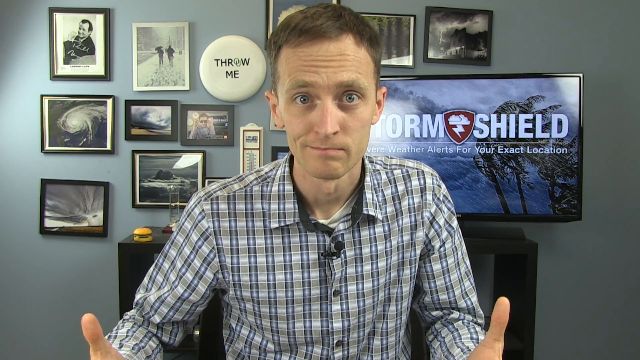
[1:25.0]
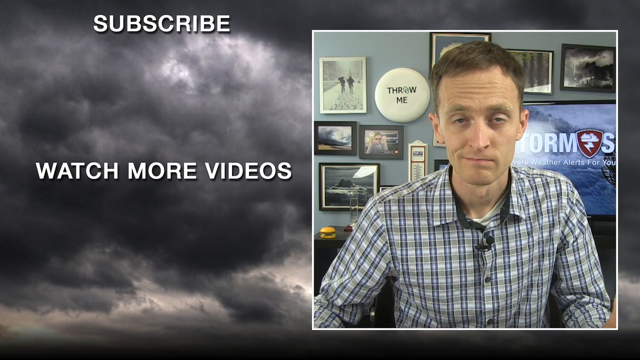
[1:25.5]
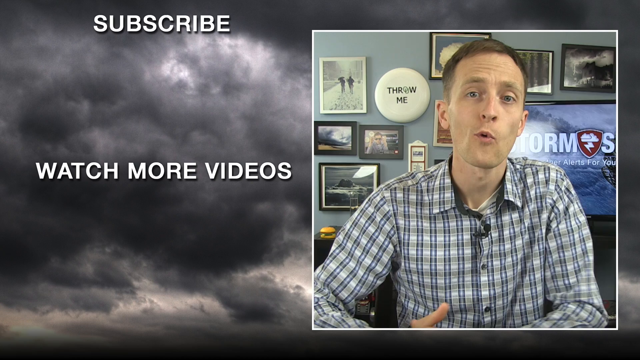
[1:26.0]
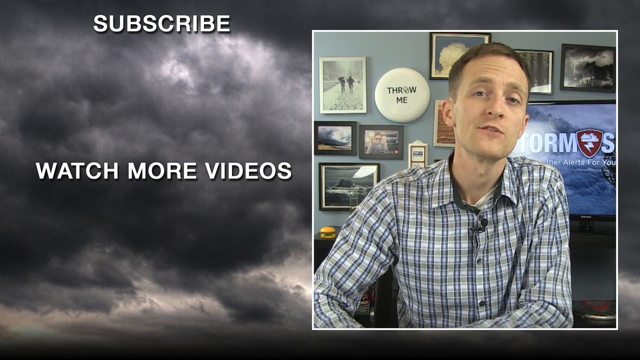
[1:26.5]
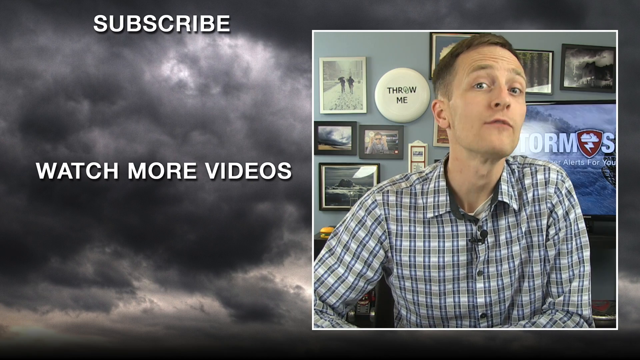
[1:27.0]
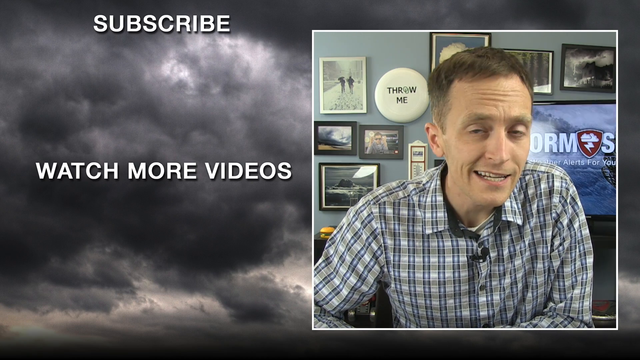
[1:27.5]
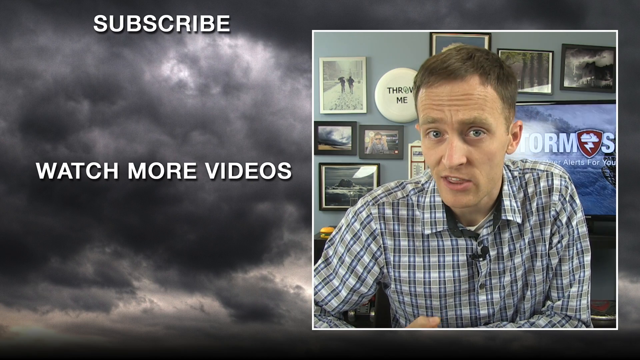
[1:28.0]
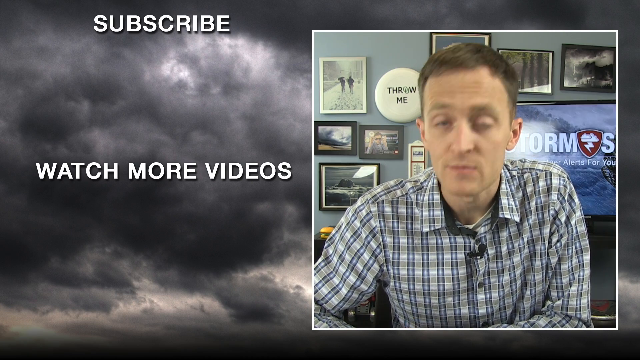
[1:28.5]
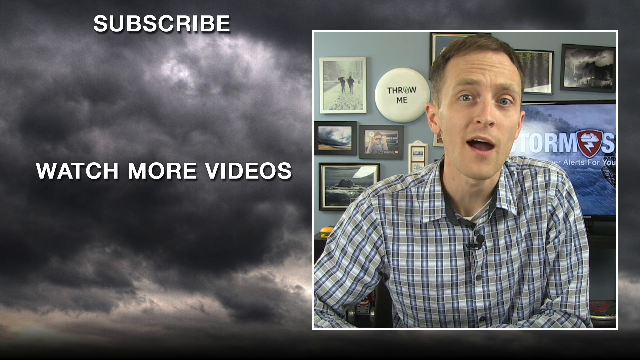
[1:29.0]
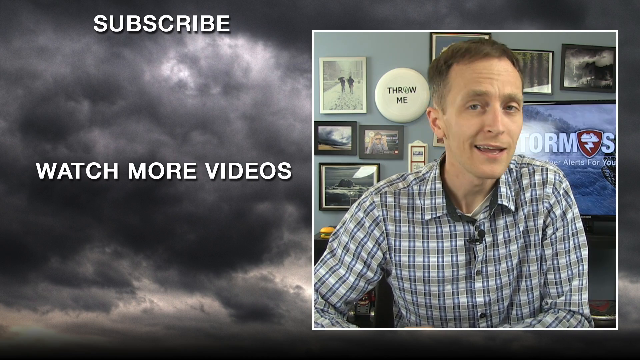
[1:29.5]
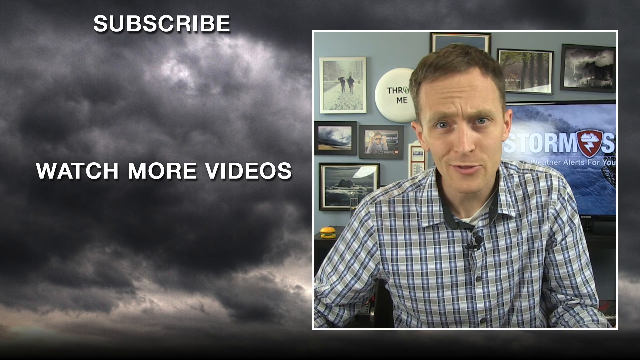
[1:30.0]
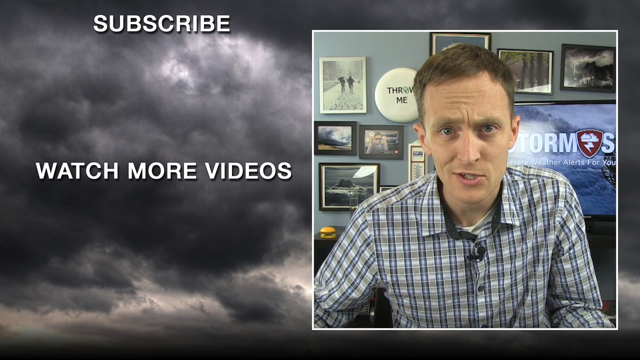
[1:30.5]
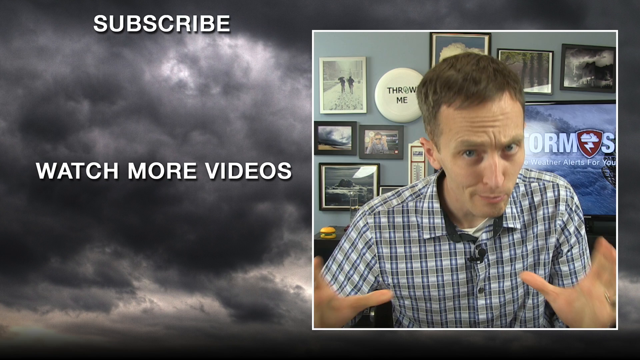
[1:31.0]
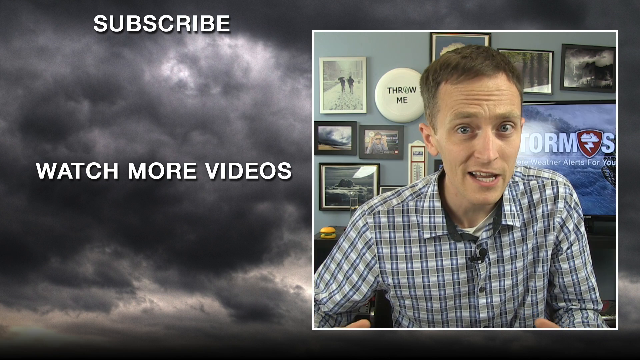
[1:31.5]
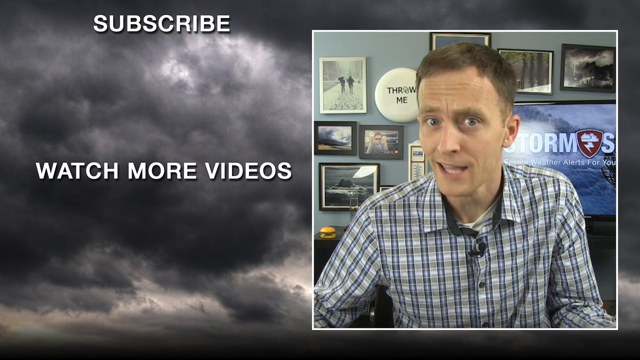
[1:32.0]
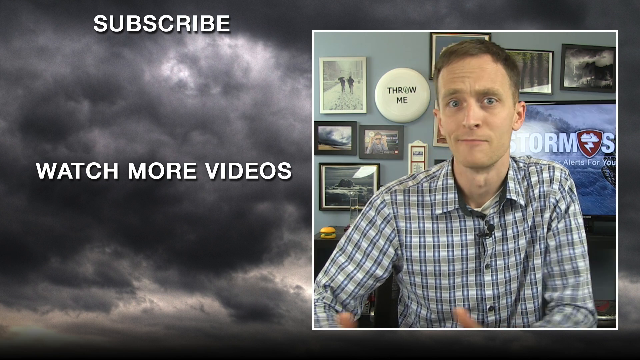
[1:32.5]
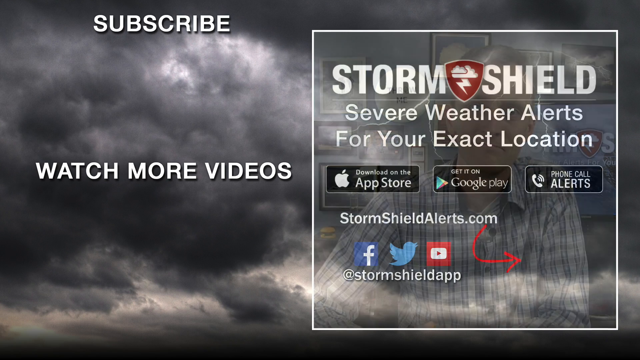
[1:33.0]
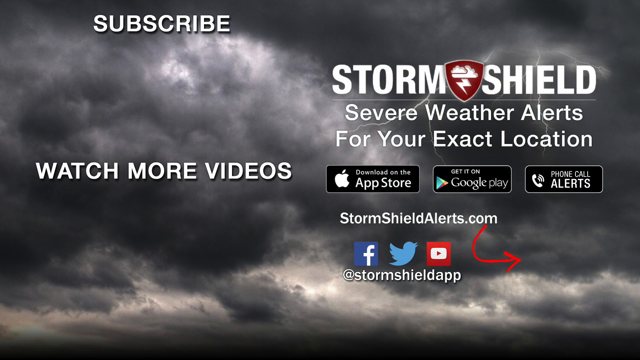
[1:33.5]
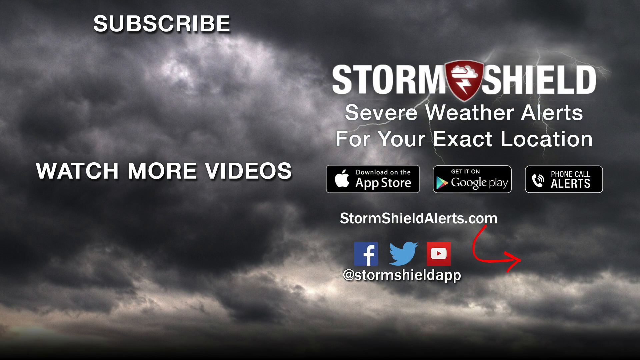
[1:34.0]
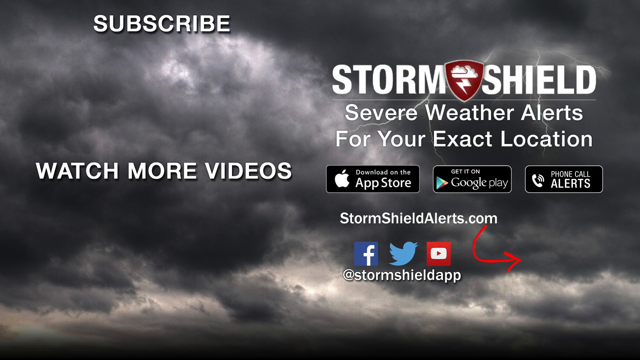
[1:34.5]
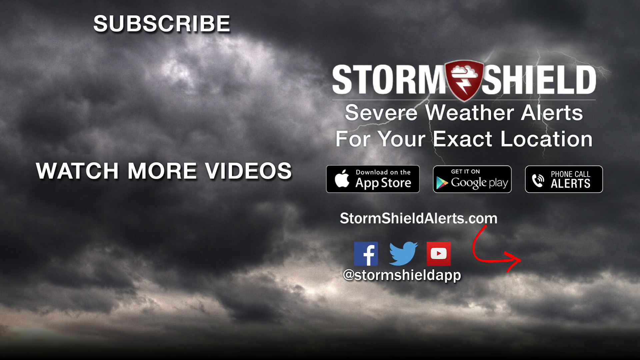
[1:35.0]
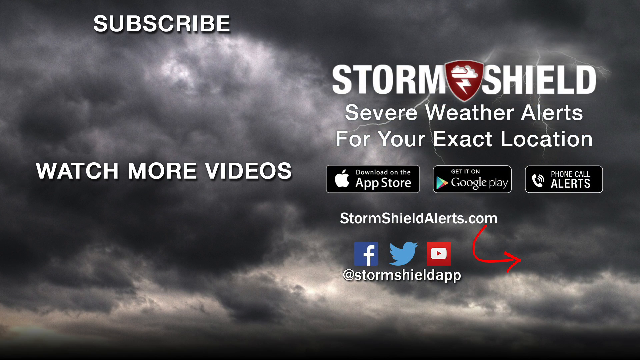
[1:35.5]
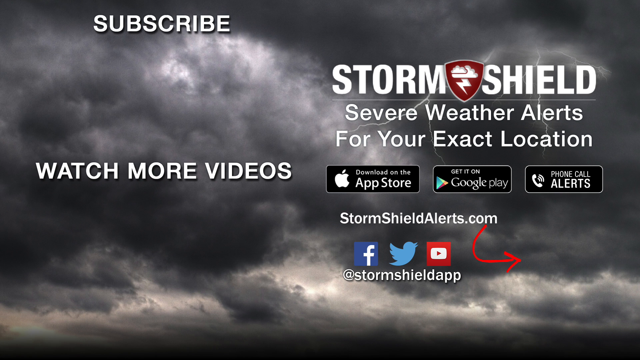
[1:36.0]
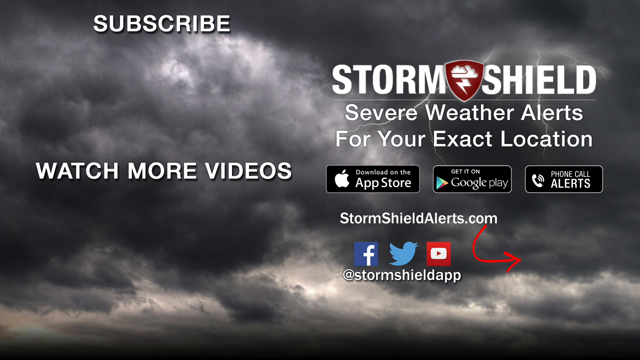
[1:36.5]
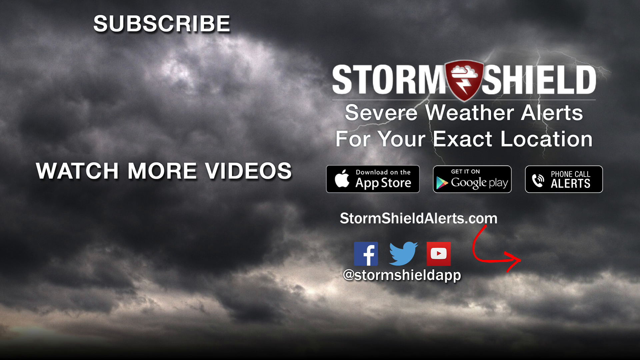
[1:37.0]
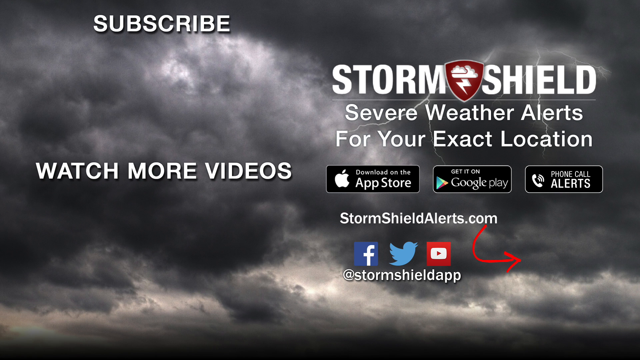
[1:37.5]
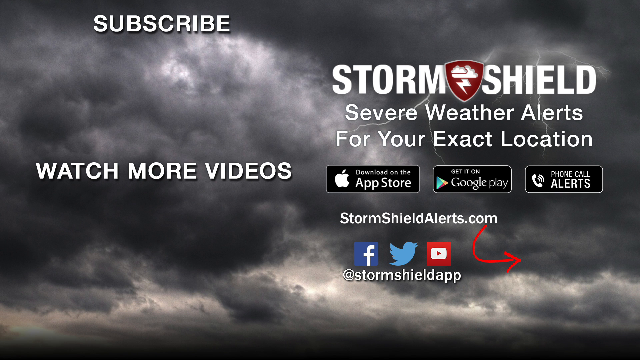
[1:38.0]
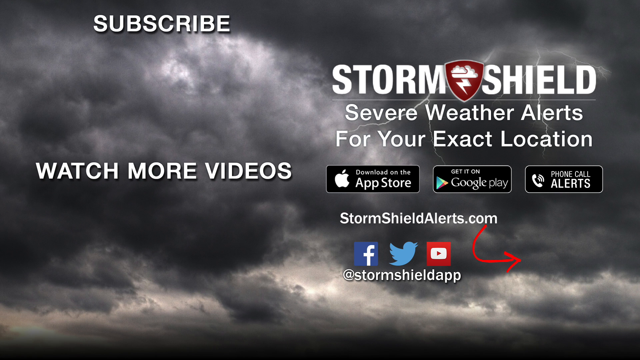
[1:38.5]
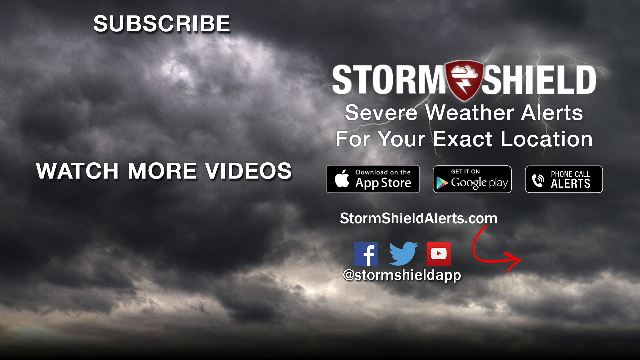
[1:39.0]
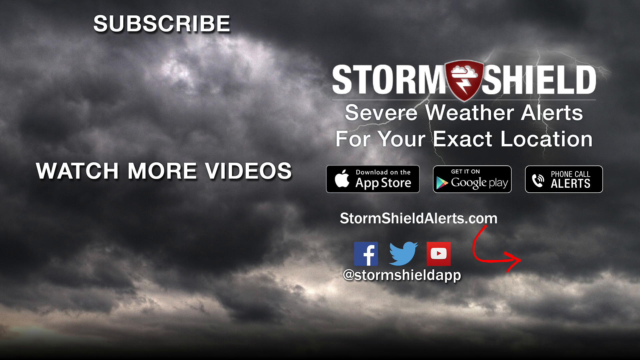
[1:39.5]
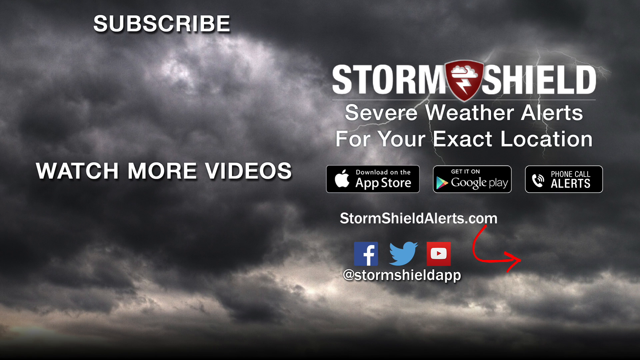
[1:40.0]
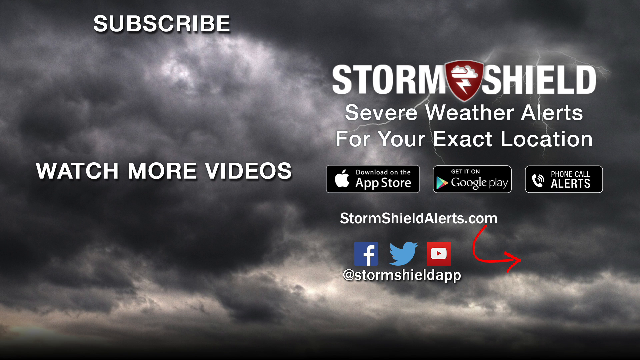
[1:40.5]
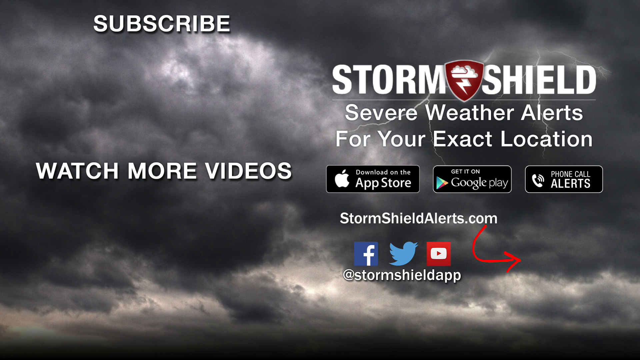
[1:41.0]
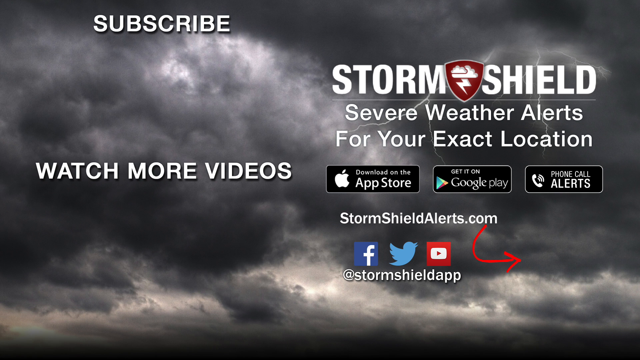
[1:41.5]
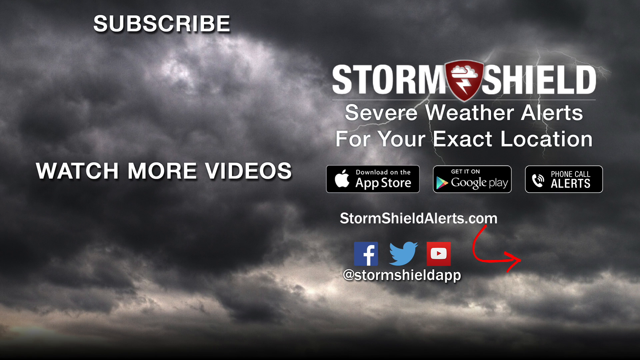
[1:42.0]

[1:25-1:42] Jason Myers Meteorologist appears side by side with a subscribe prompt, the Storm Shield icon, and "watch more videos" with a video recommendation. Jason Myers then fades out and a Storm Shield advertisement appears, showing "Severe weather alerts for your exact location." It then shows download information for the Apple Store and Google Play, and phone call alerts, followed by "StormShieldAlerts.com," with three social media icons below it: Facebook, Twitter and YouTube. A red arrow loops to another box, which probably leads to StormShieldApp.com. Then the video ends.